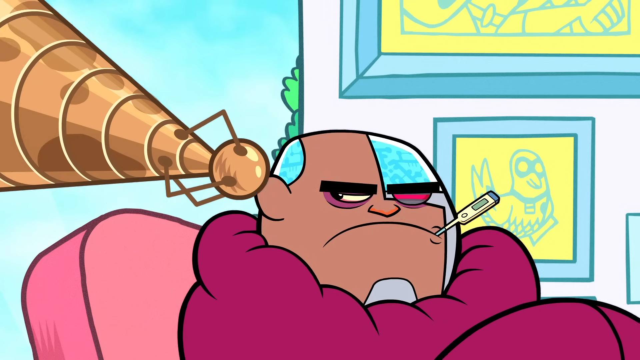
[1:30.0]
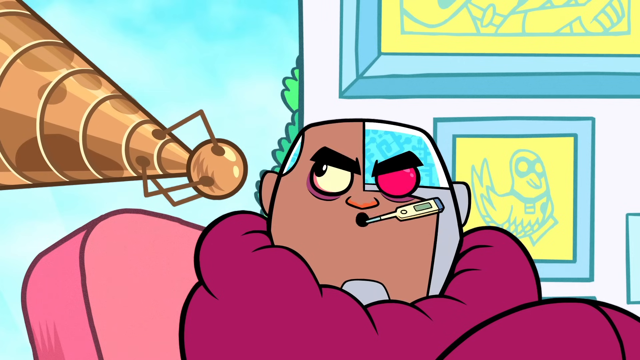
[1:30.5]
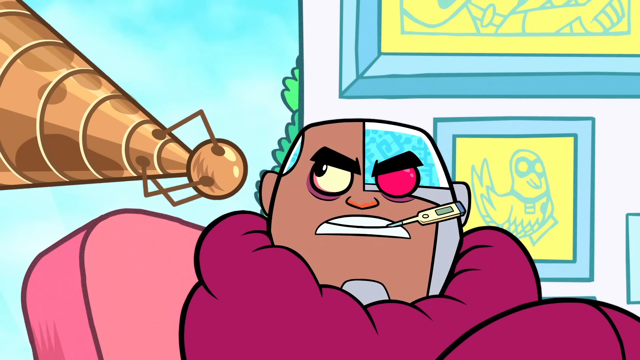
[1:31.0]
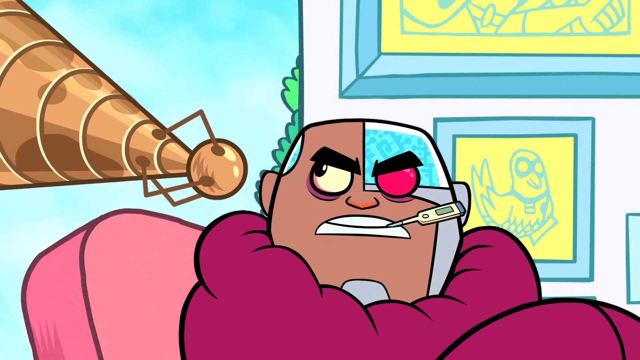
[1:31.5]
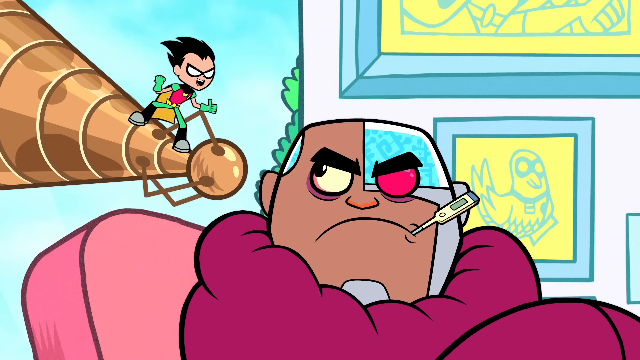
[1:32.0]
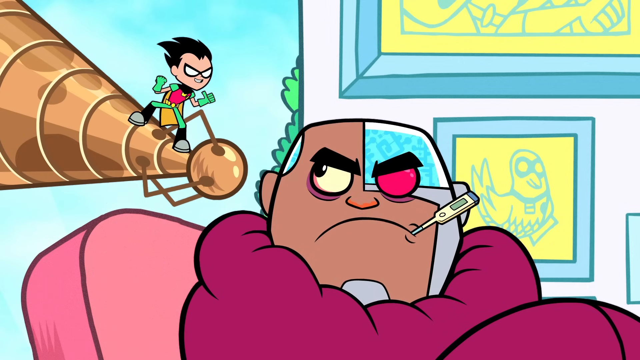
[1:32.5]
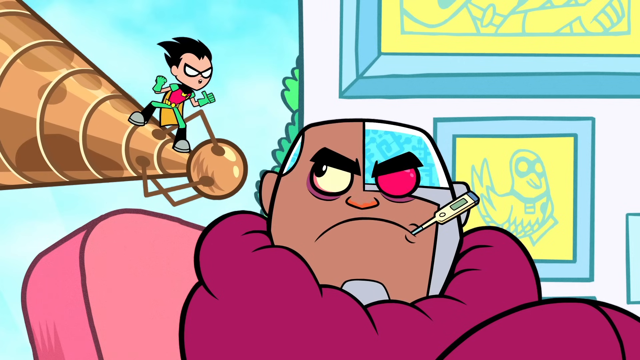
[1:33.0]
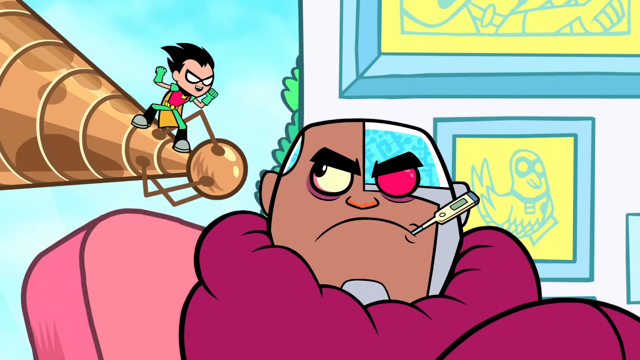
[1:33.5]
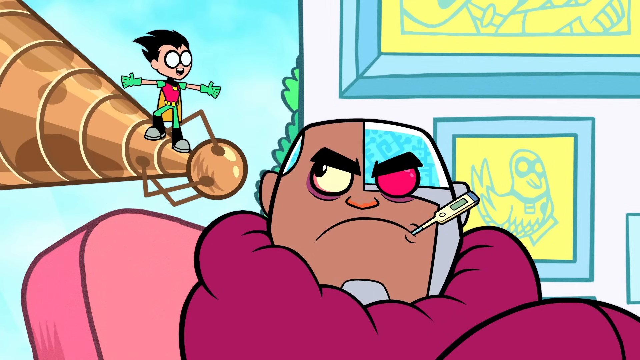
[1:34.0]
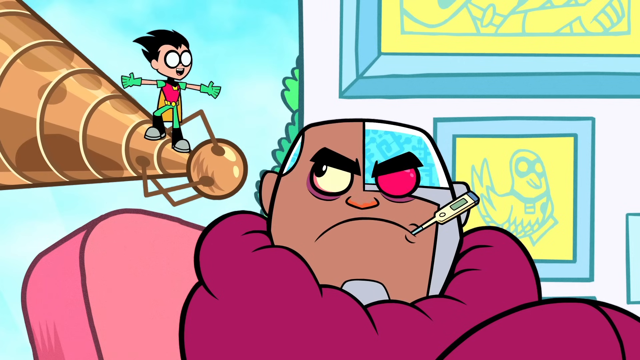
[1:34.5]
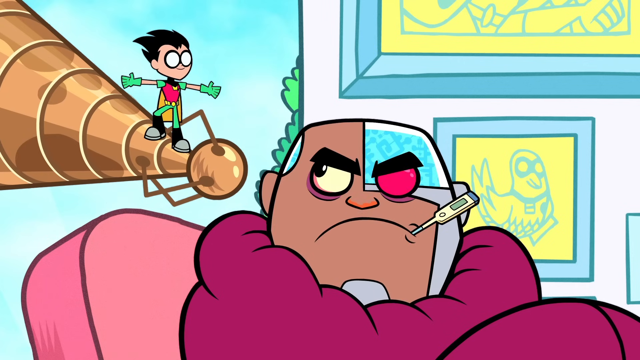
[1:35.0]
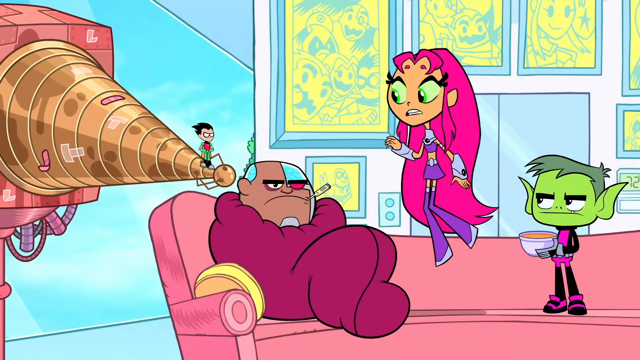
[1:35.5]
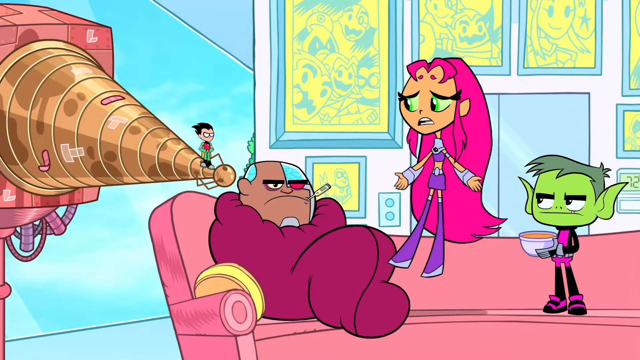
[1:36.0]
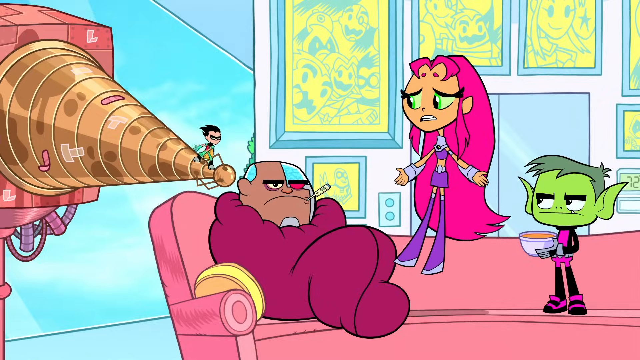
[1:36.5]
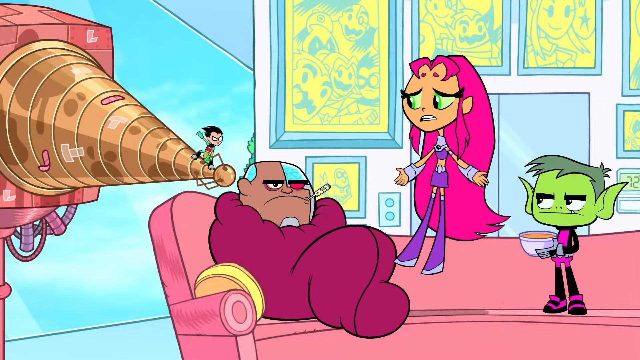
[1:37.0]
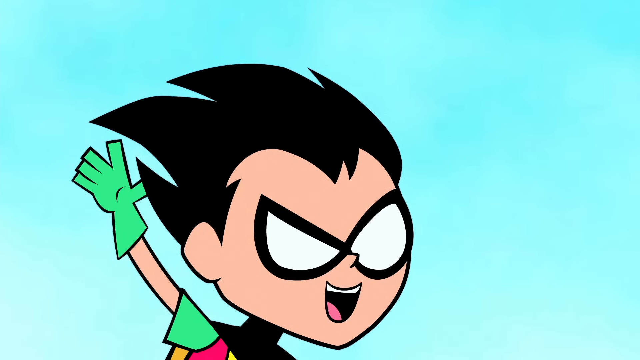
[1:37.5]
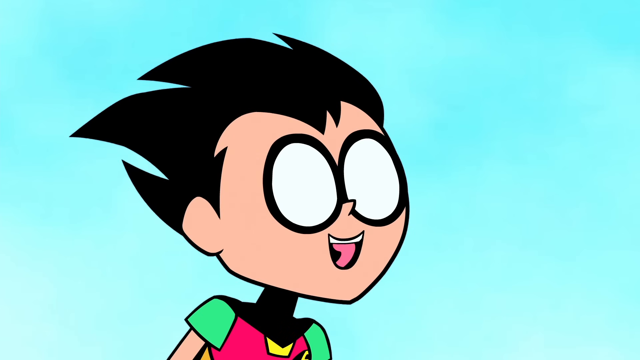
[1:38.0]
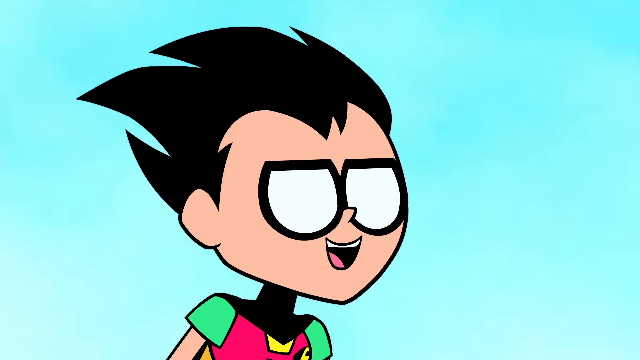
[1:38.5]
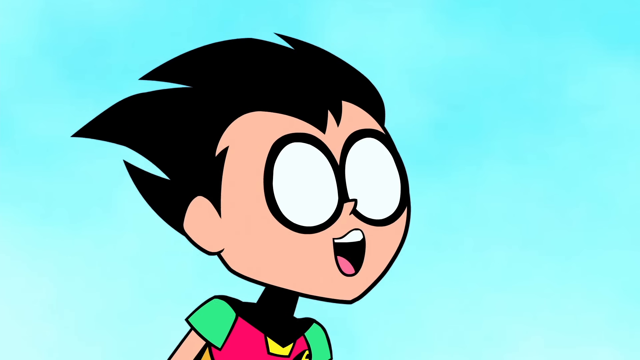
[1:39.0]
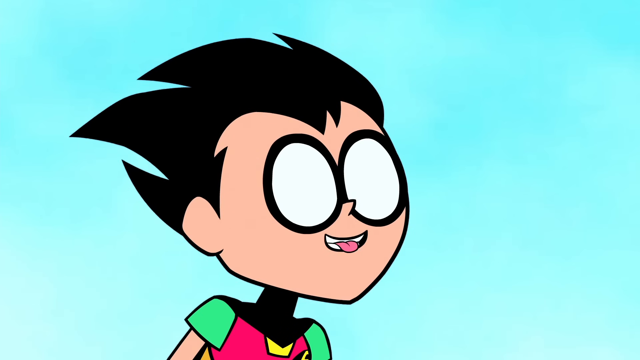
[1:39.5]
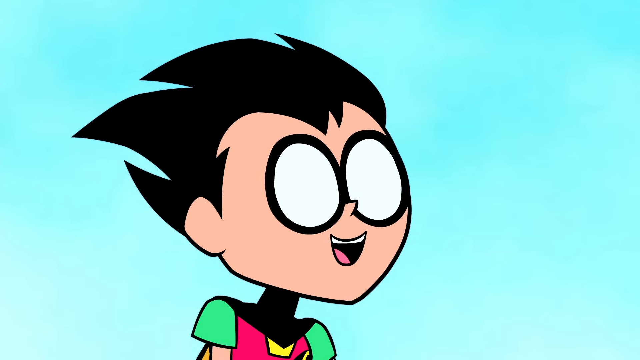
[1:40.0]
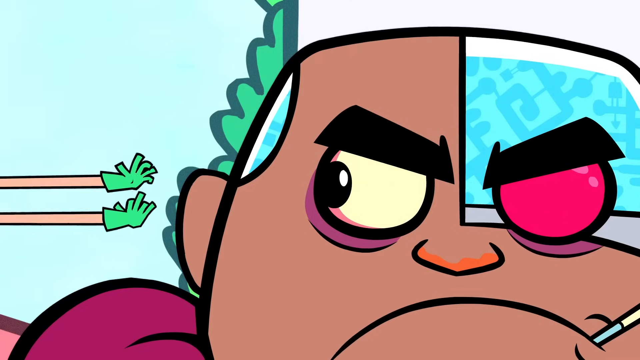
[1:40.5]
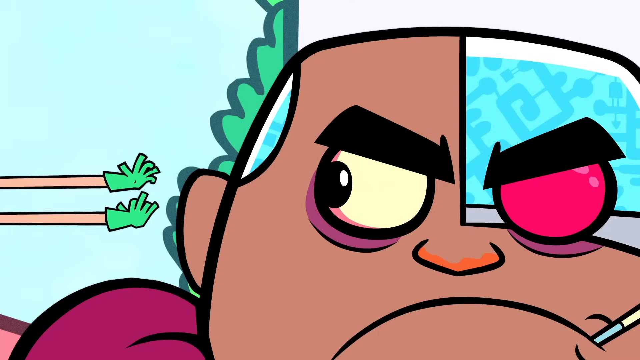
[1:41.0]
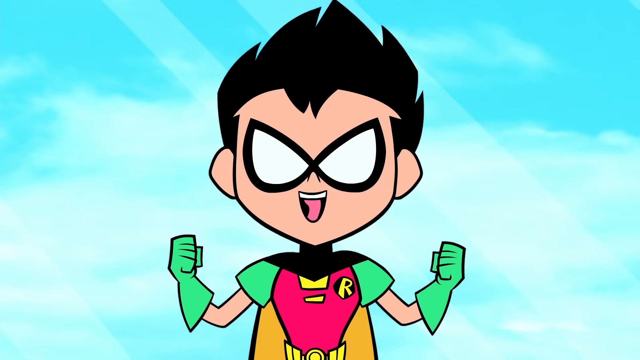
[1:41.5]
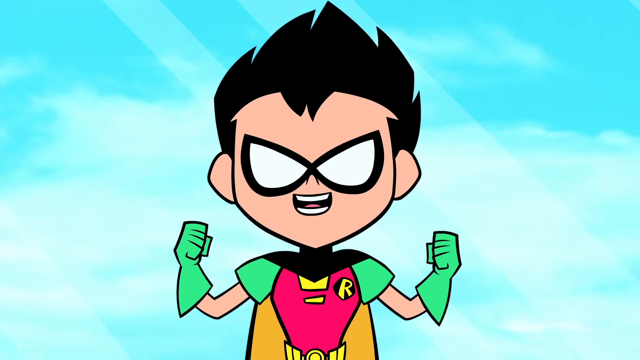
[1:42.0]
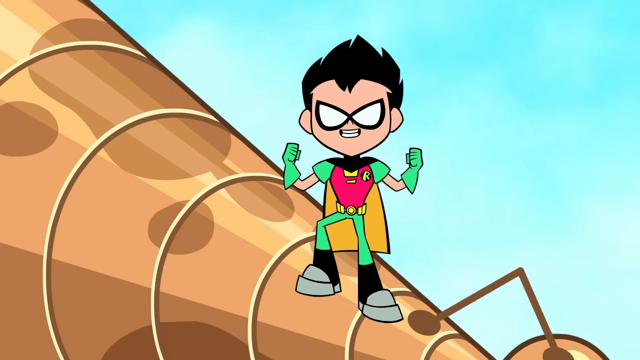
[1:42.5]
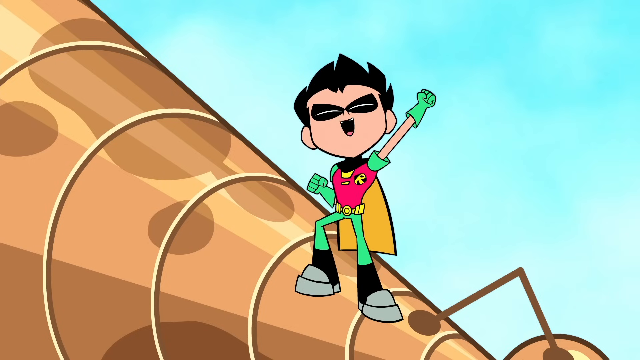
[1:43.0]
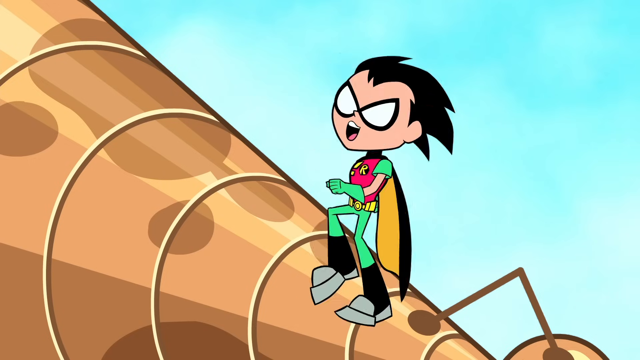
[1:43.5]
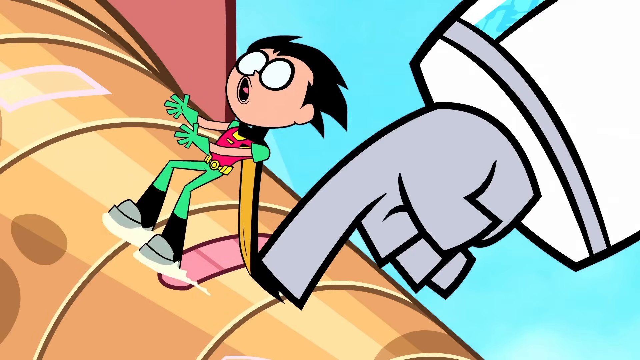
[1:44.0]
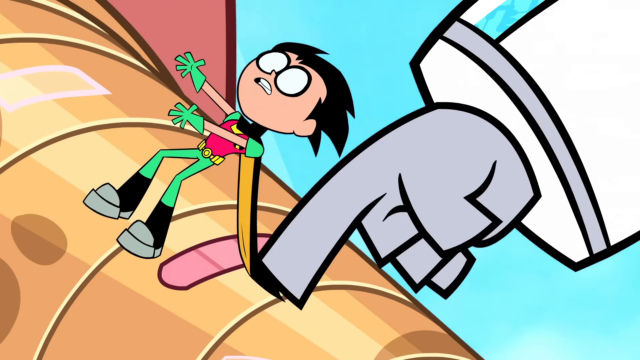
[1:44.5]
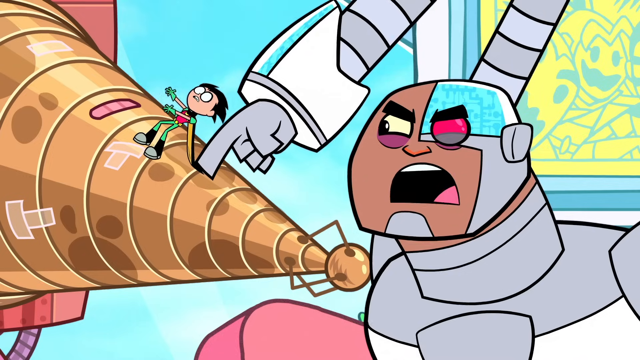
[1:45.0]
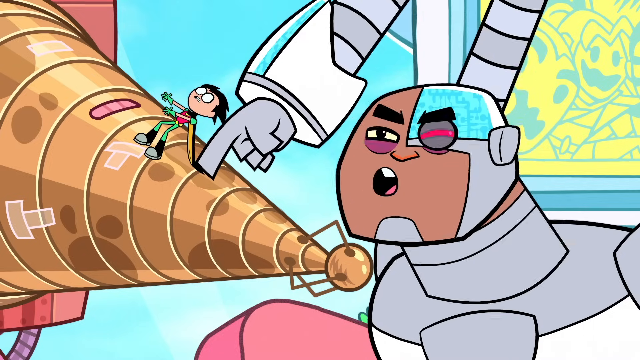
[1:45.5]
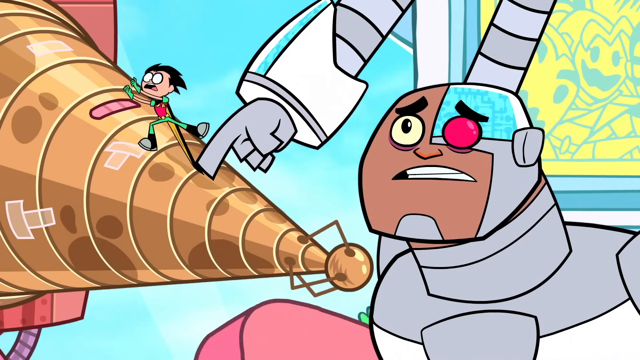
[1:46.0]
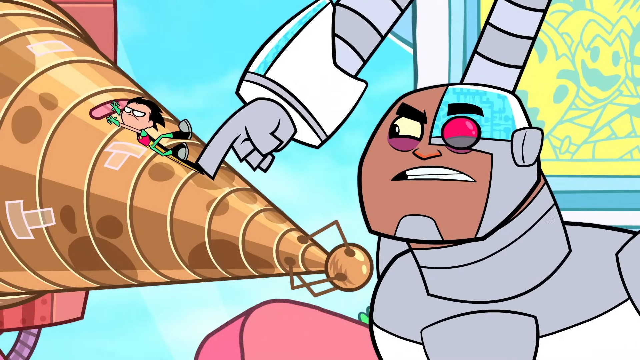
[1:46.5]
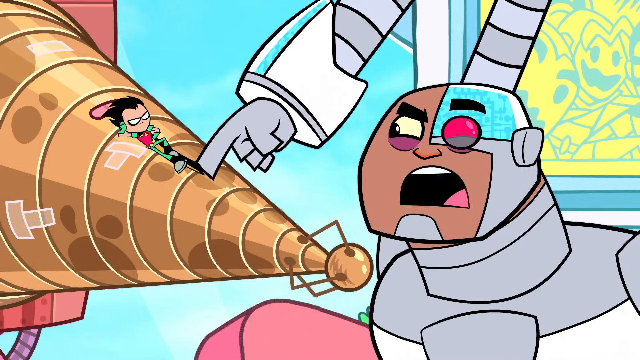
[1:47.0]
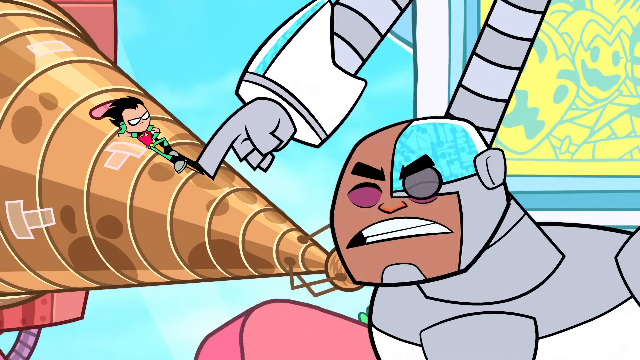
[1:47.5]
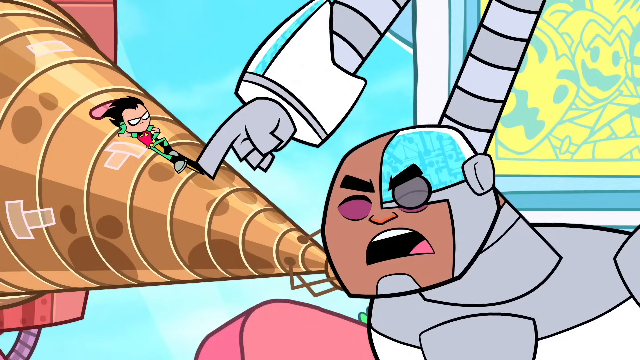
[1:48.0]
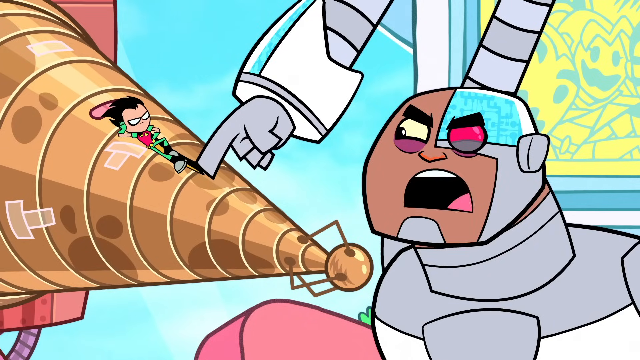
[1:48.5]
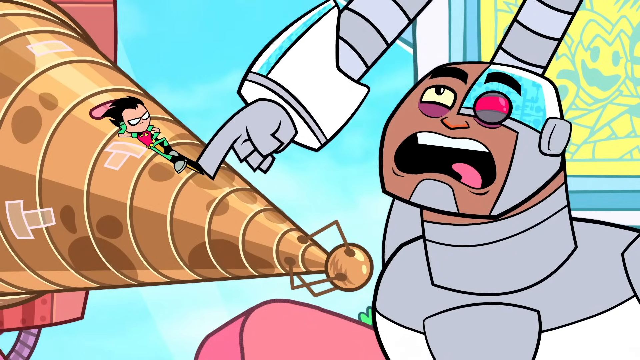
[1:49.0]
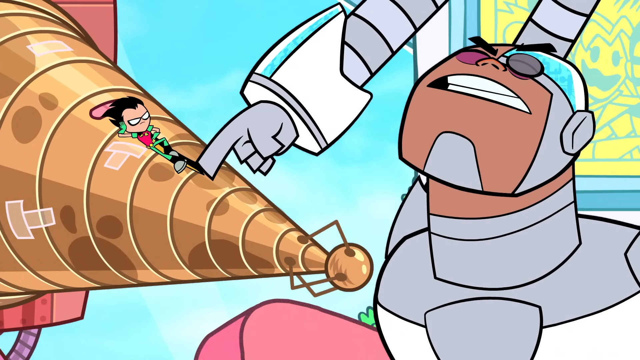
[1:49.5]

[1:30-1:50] Cyborg appears to be sick: he has a red blanket wrapped around him and a thermometer in his mouth, and he is lying on a long pink couch. Robin slides down some type of machine pointed at Cyborg's head, a big pink and gold machine with kind of a cone shape on the front, which is what Robin slides down. Art on the wall looks to be yellow pictures of the Teen Titans. Beast Boy is standing on the couch with a bowl of something. The view zooms in on Robin's face. Robin speaks and reaches towards Cyborg, then throws his arm up in the air and runs up the machine. Cyborg uses his finger to trap Robin by his cape so he can't make his way up the machine.